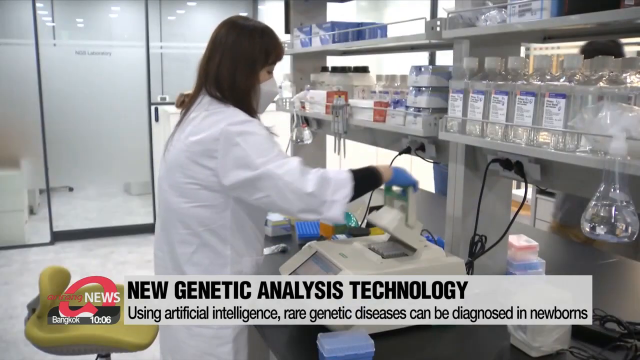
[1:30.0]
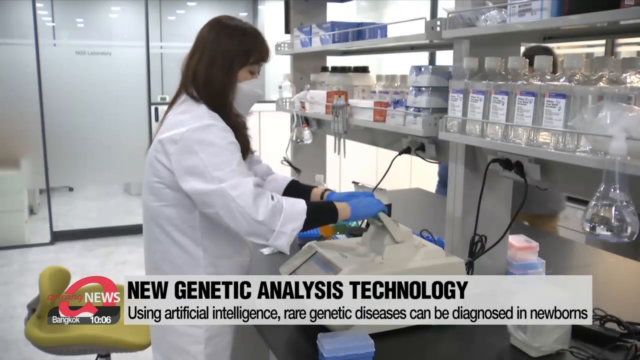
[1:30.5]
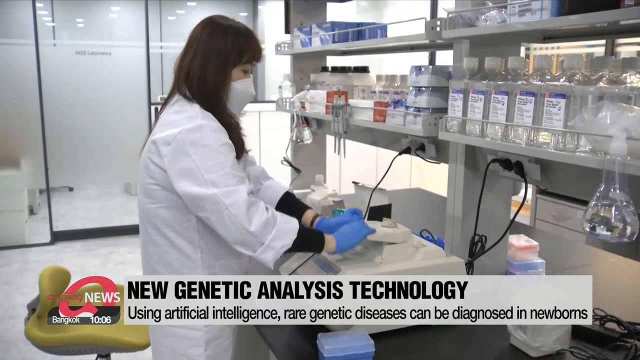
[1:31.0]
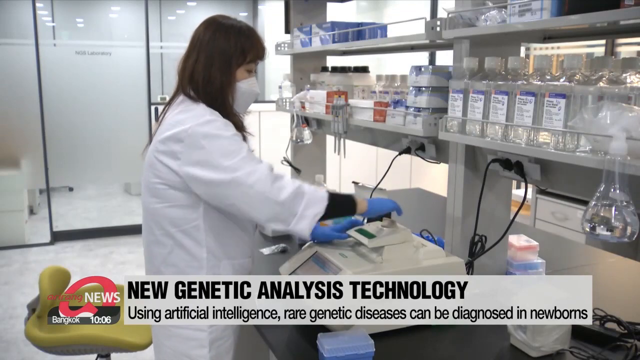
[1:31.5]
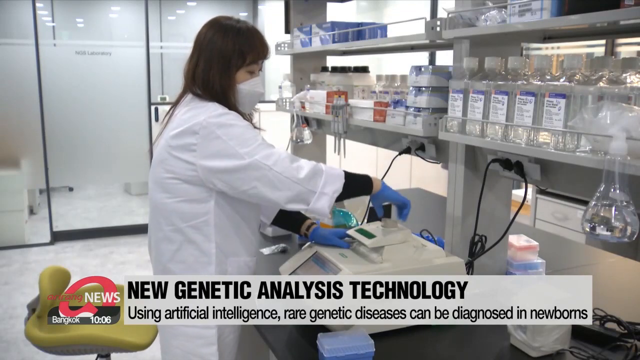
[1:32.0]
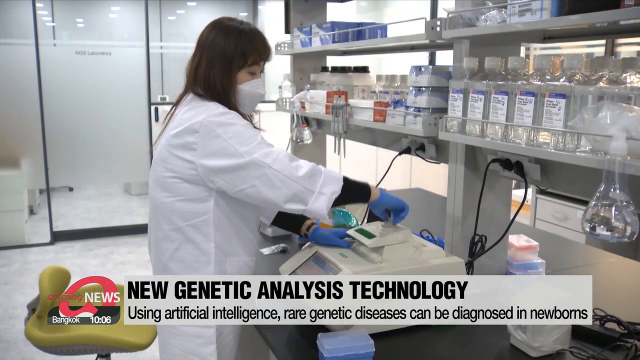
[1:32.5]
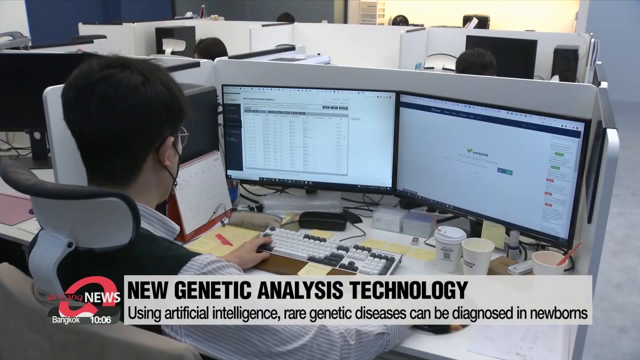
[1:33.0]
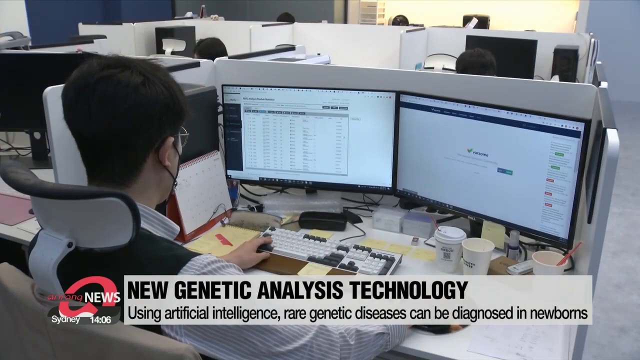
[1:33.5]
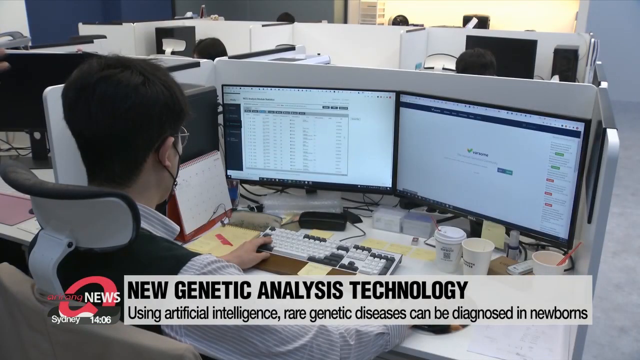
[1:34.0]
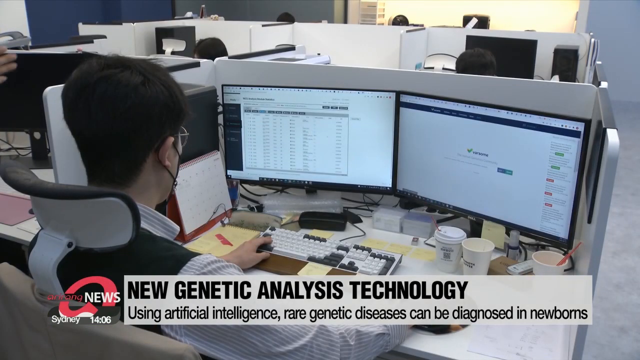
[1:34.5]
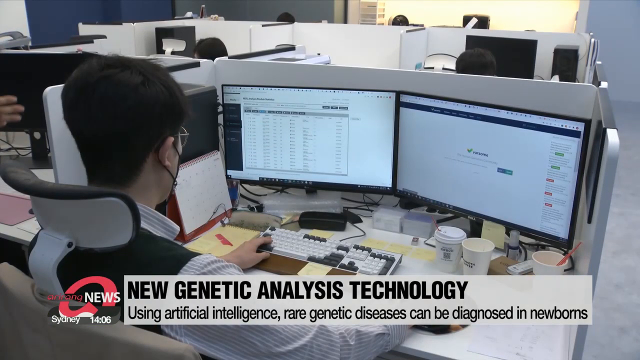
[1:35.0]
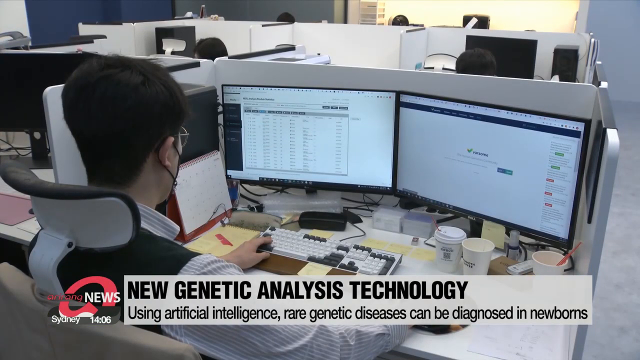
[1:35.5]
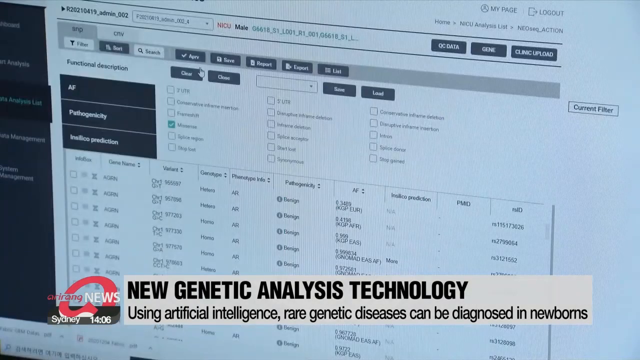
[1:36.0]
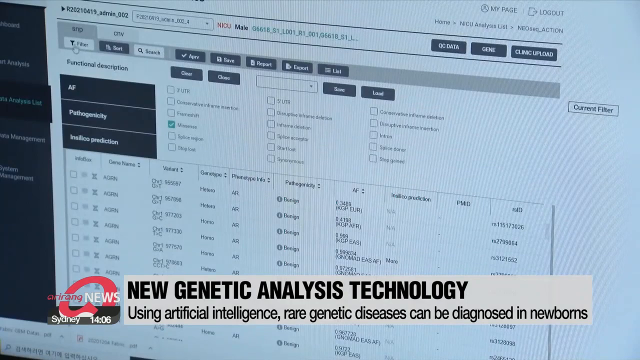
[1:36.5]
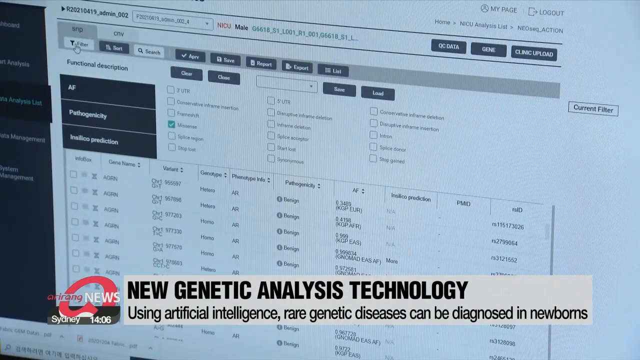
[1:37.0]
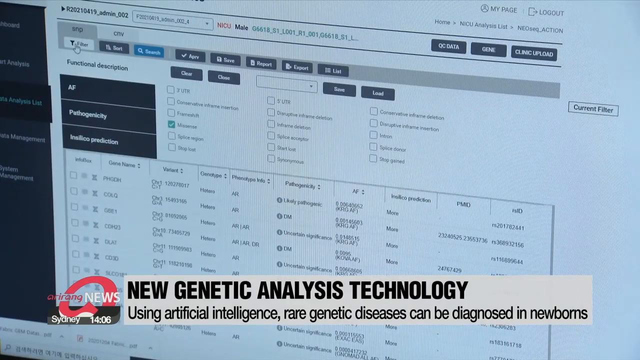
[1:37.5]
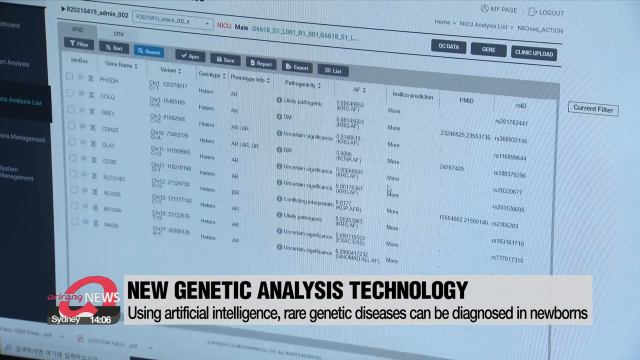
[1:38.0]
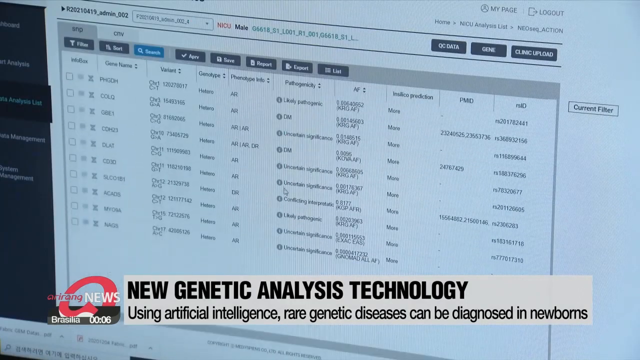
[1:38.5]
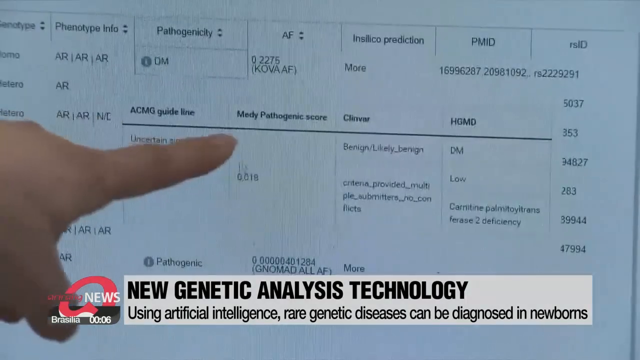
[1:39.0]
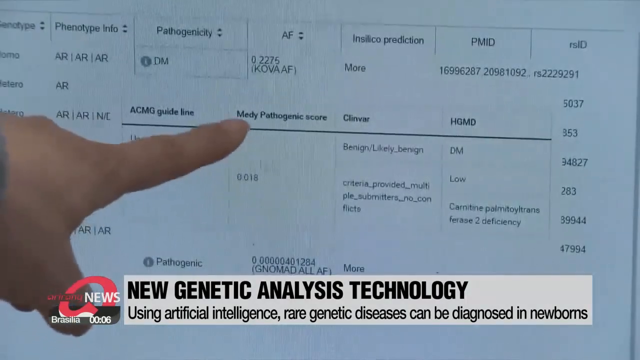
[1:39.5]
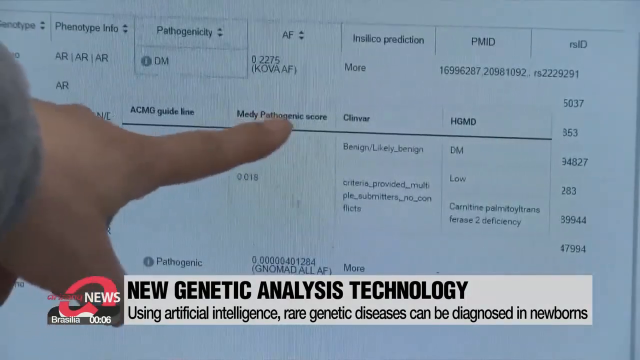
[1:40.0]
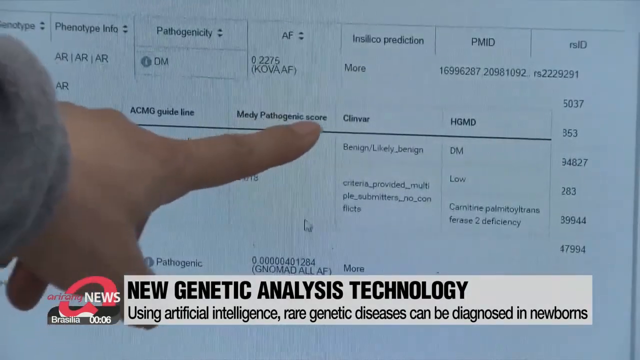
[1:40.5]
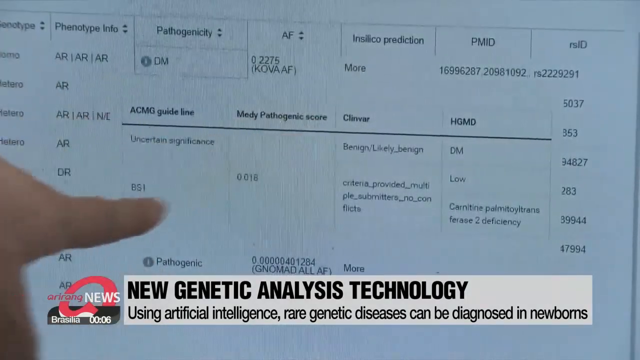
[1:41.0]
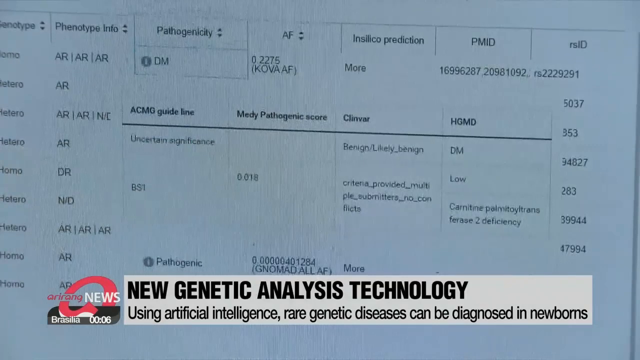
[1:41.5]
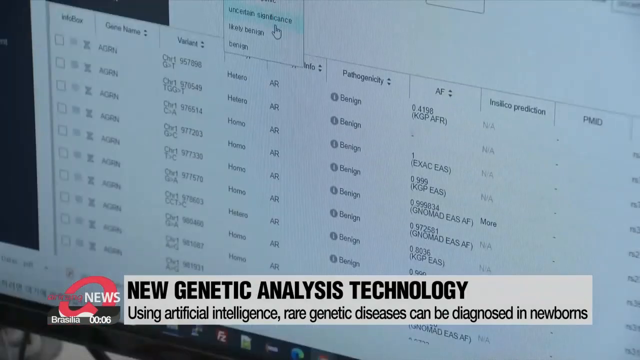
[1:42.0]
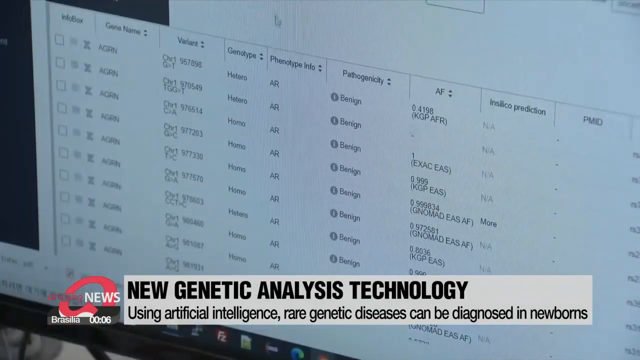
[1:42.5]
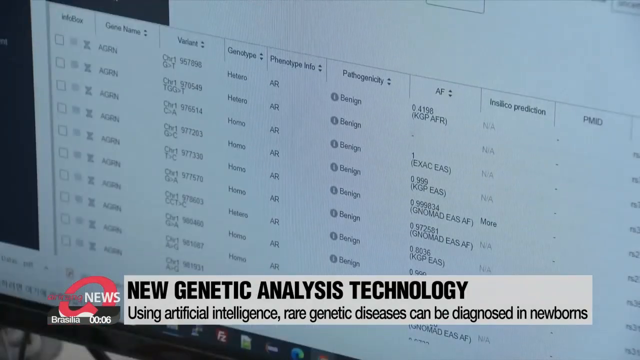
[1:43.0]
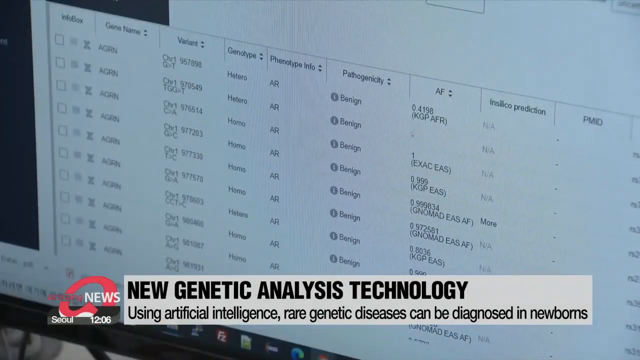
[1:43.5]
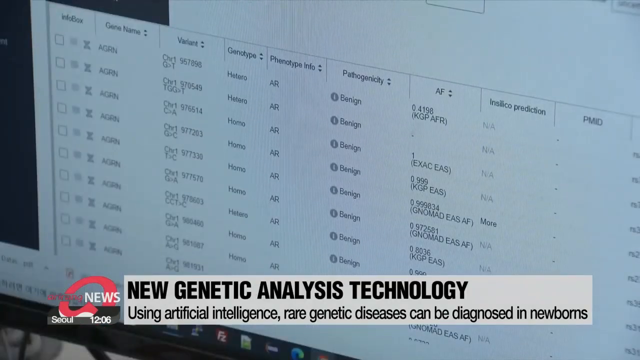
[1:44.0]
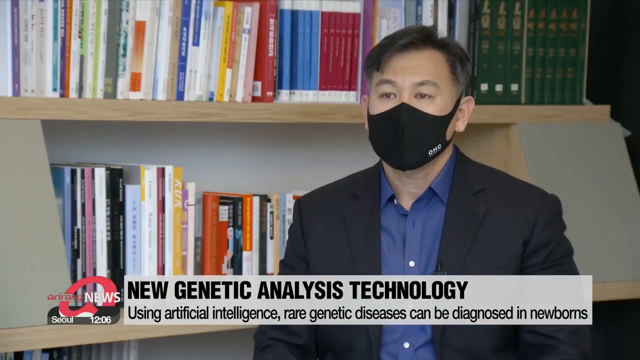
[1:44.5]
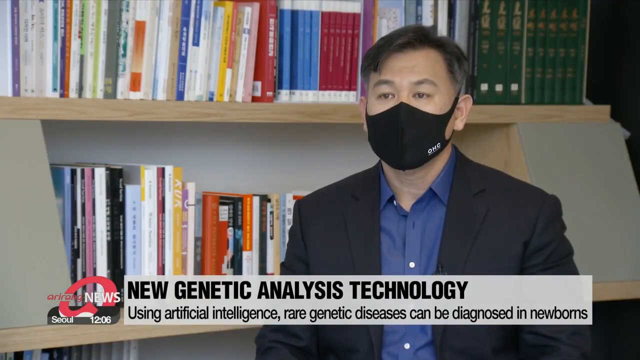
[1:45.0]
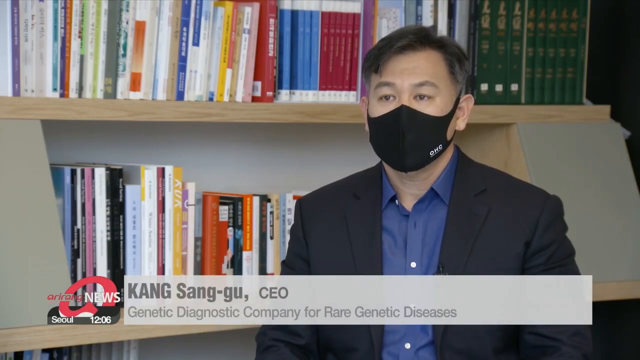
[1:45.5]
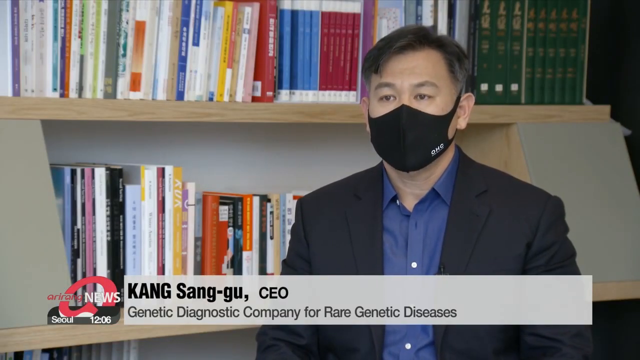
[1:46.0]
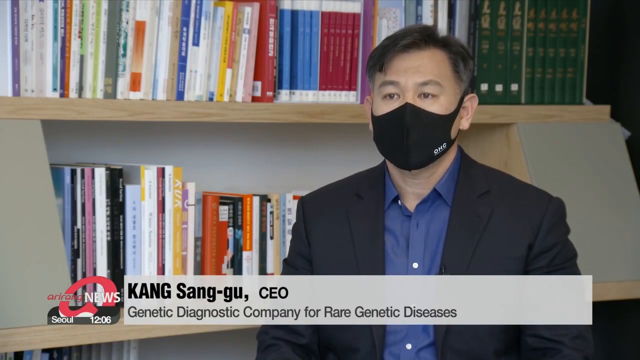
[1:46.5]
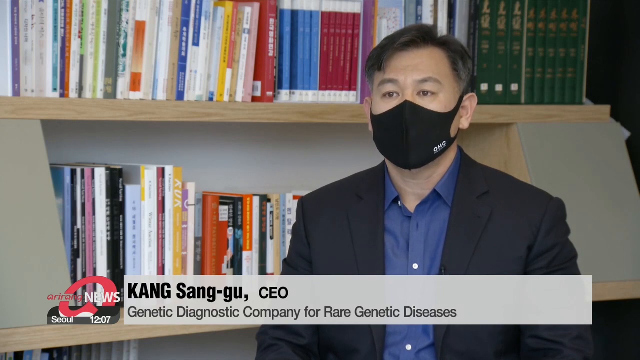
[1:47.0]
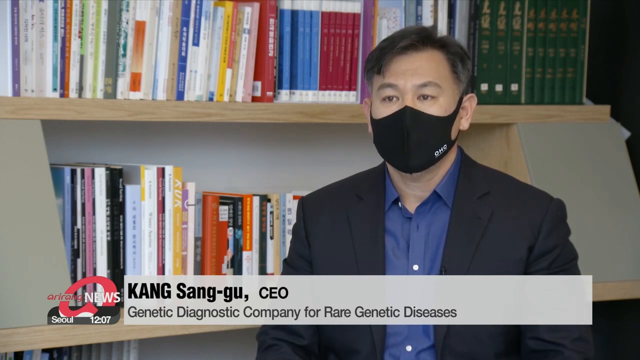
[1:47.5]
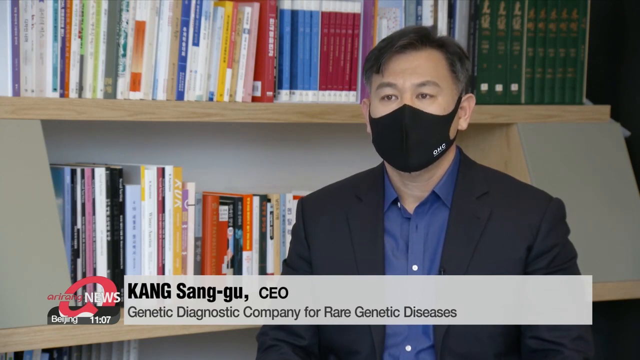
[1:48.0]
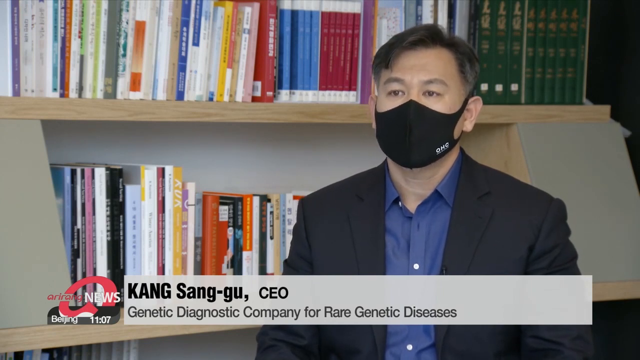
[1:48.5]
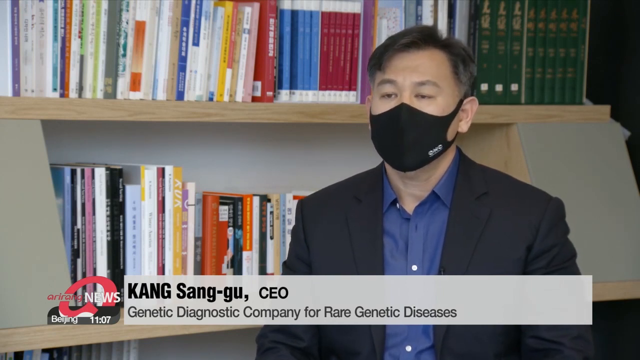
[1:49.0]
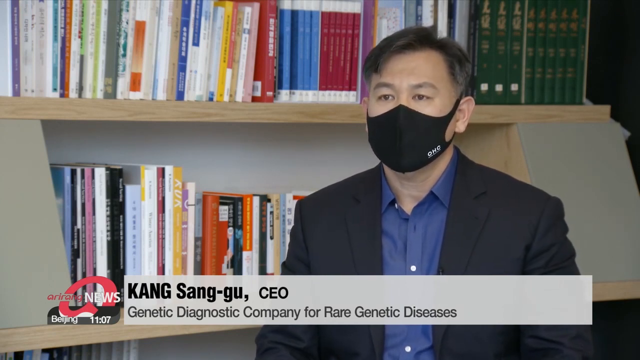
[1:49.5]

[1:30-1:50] The lab has several shelves holding plastic containers with fluid in them. A lab technician in a white jacket and blue gloves closes the lid on a machine. The video cuts to an office where a young man works at a computer with what looks like a table or spreadsheet open. He clicks through it, a close-up shows one of the columns, and he points to the screen. Next comes an interview inside an office with shelves of many books behind the subject, Kang Sang-gu, a CEO. The crawler reads "Genetic Diagnostic Company for Rare Genetic Diseases." He is a middle-aged Asian man with mostly black hair, a little white on the sides, wearing a black mask, a black jacket and a blue shirt, with no tie. He looks at the interviewer just off to the side.